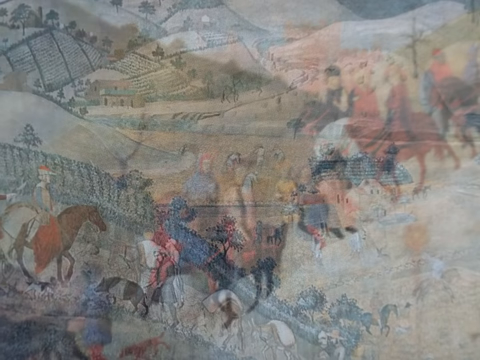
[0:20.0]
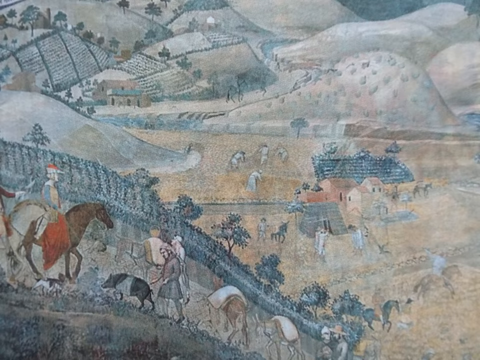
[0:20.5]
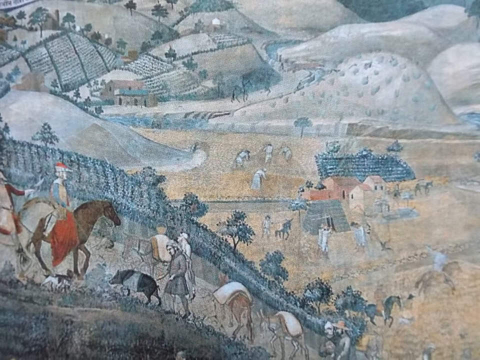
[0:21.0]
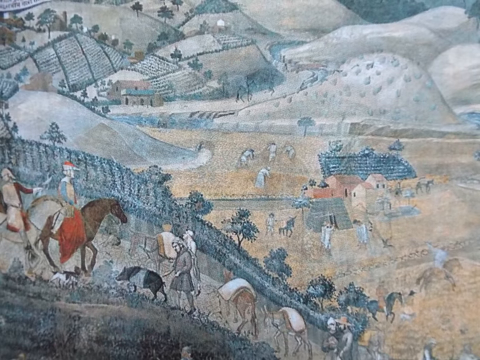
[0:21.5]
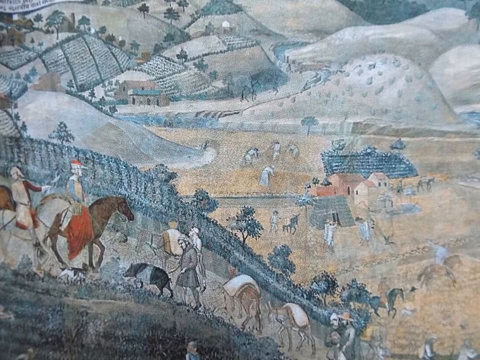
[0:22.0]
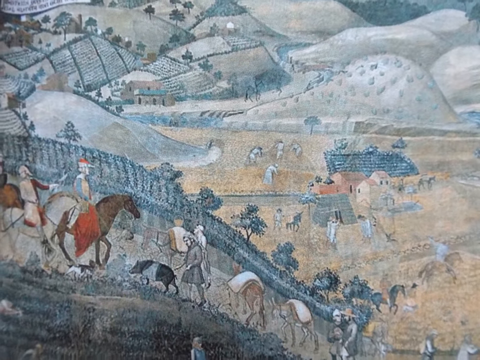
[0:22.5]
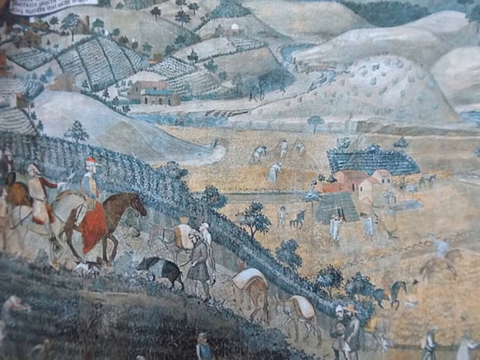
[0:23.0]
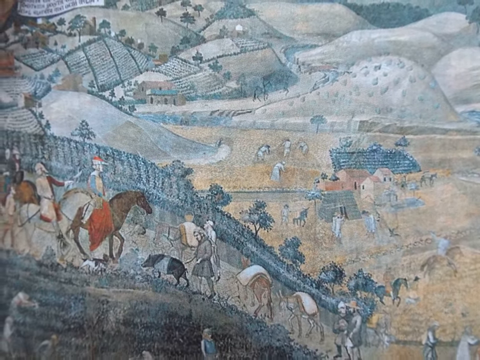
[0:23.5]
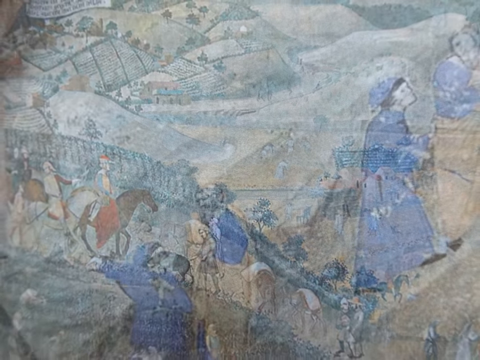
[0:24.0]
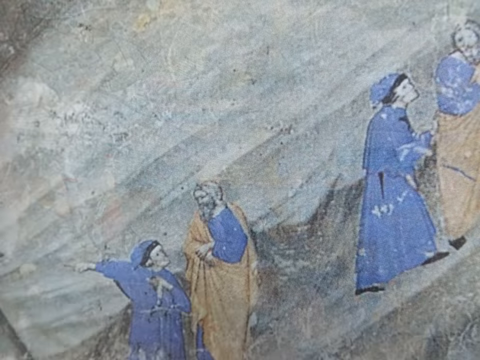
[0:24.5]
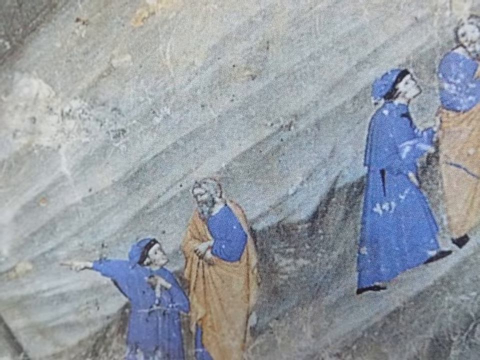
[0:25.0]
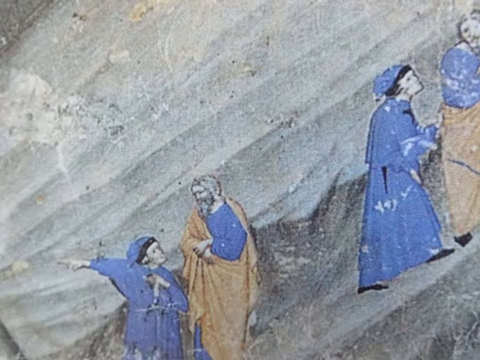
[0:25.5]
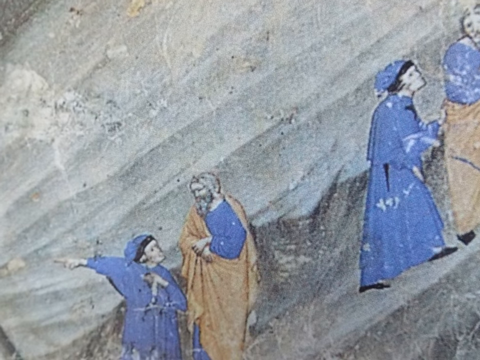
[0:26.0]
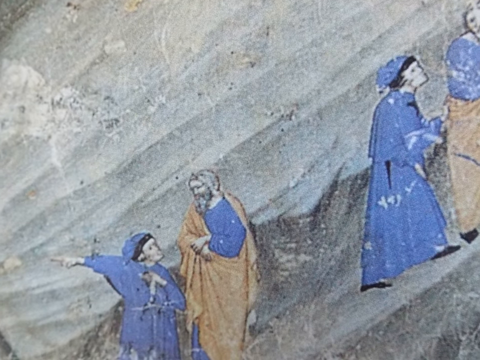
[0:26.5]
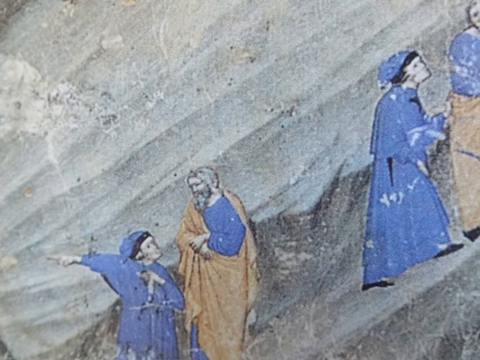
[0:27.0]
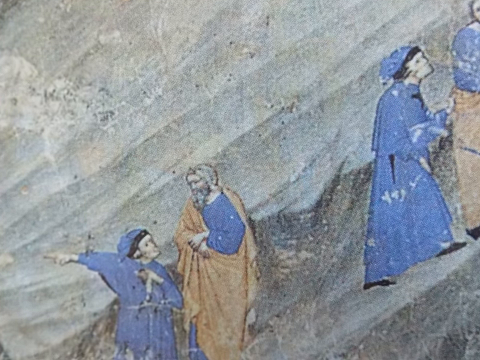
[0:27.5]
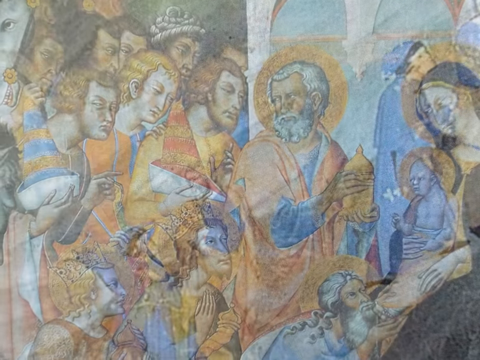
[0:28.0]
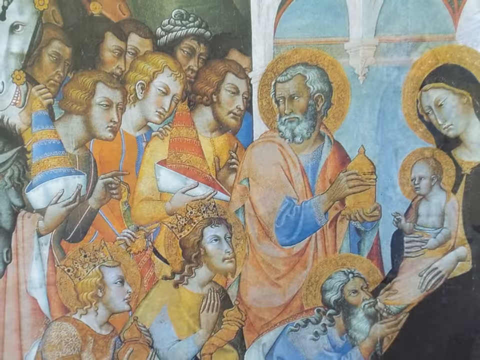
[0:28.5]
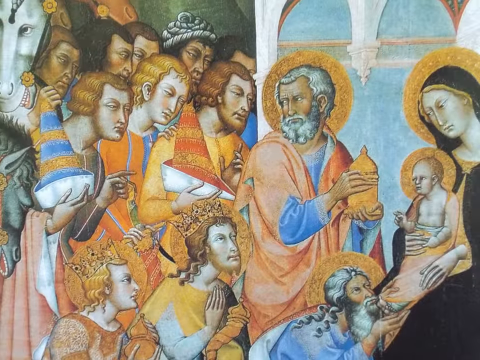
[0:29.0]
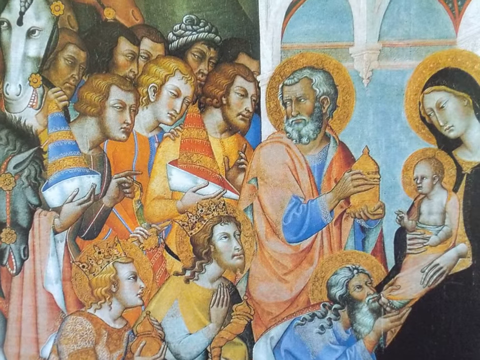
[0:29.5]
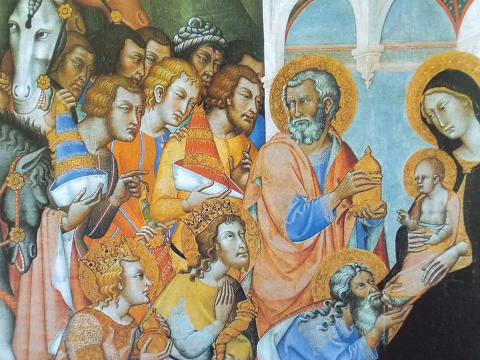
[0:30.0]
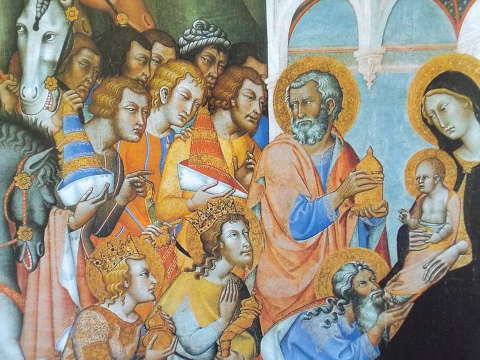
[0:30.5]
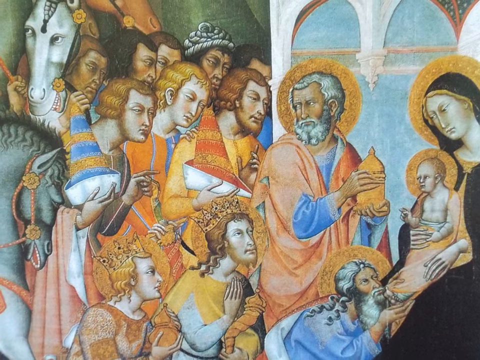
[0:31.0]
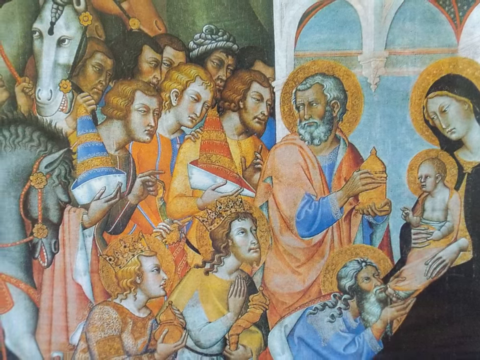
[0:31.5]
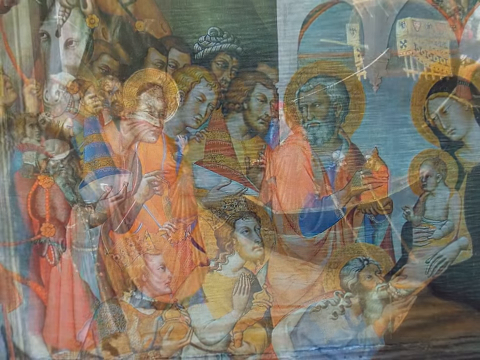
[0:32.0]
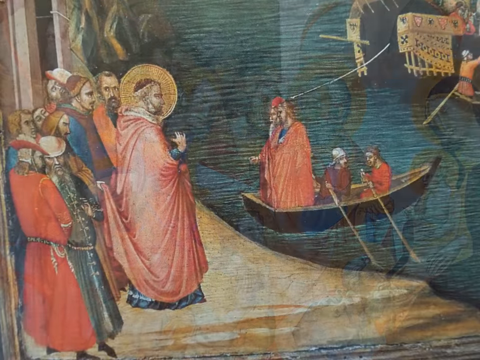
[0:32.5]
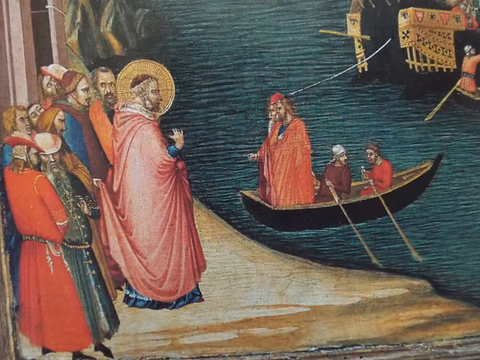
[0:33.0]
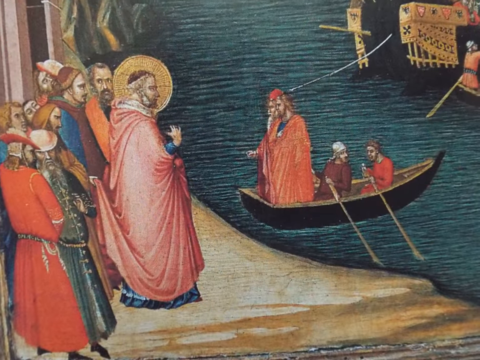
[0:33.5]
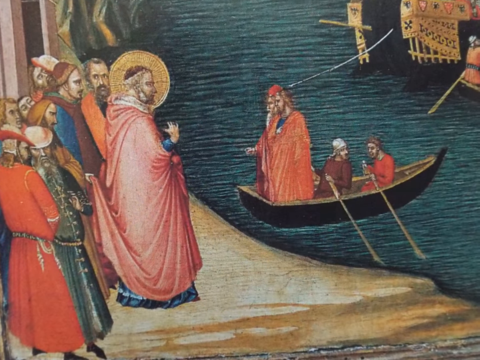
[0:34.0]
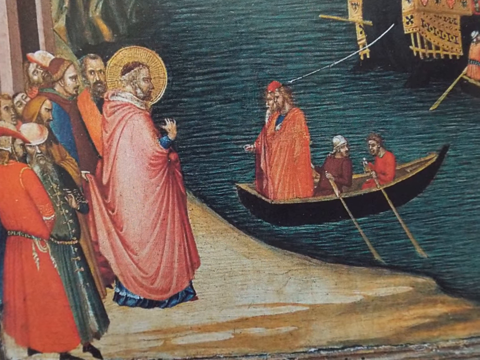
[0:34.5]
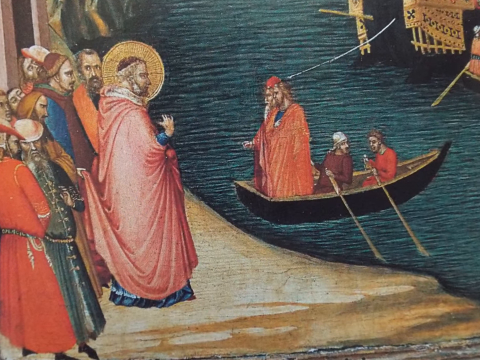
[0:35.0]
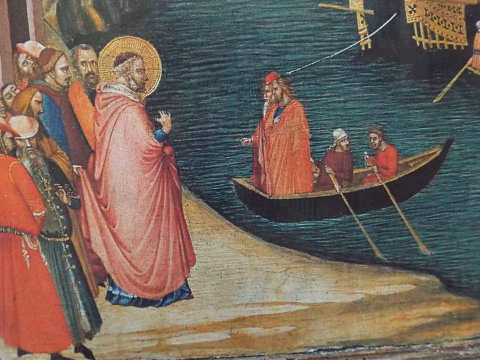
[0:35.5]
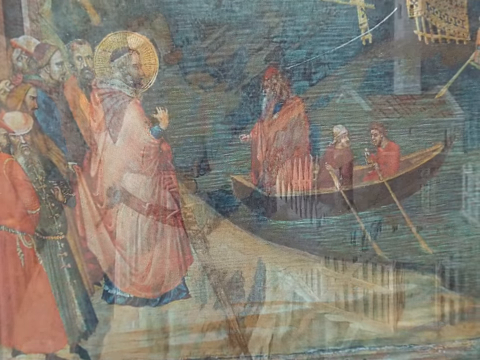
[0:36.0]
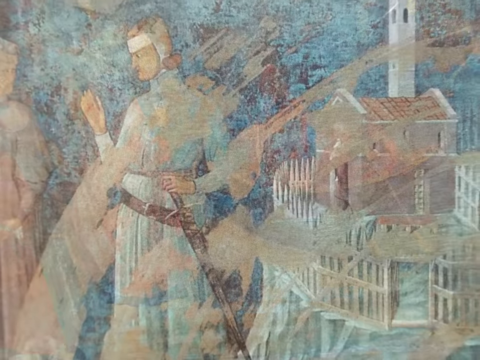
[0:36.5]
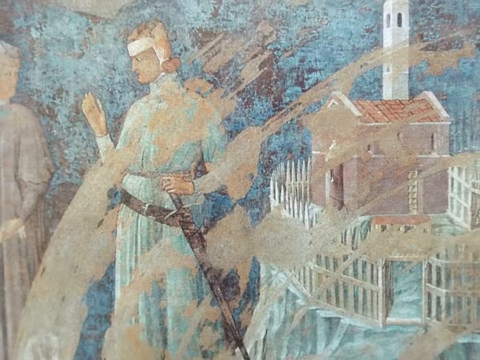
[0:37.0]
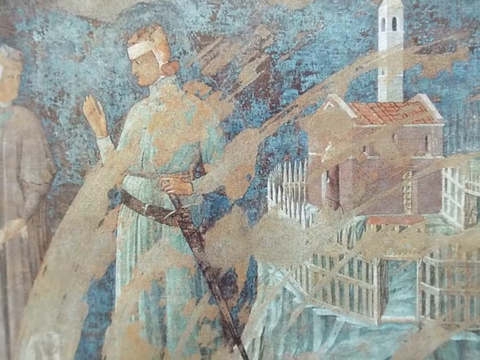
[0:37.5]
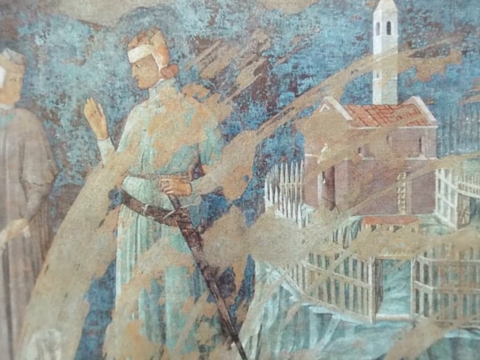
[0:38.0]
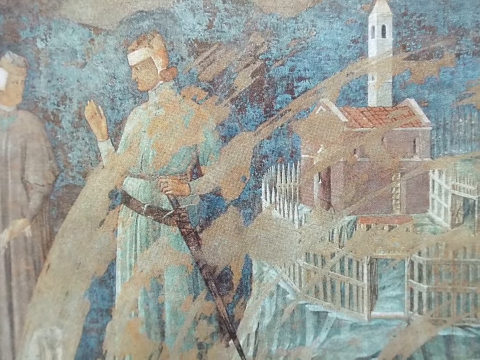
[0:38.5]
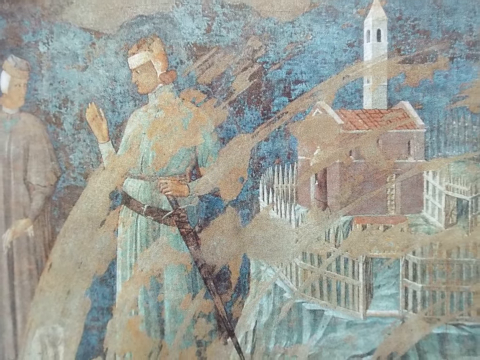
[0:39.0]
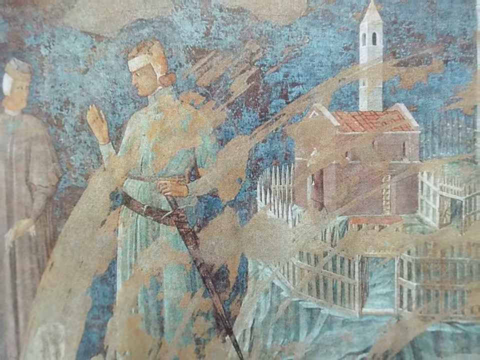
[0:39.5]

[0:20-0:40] An image that may be a painting or a drawing shows various hills, lots of gardens, and rows of trees throughout. People are with horses, and there are possibly donkeys and a pig; the donkeys have something laying over them. Below the hill are a few structures, and people are working in the field. The colors are sort of muted. The hills show rows of green dots, but the fields are mostly a beige cream color, more arid. The ground is yellow, maybe dry like hay or dead grass. The trees are fairly small, sparse and spread out, with no dense forest or bushes. Only a couple of little housing structures are visible down below. The horses are different colors: dark brown, light brown, and one black one at the bottom of the hill.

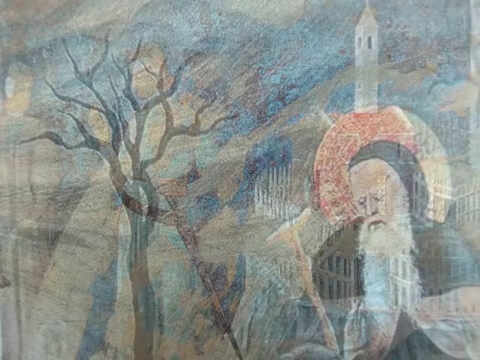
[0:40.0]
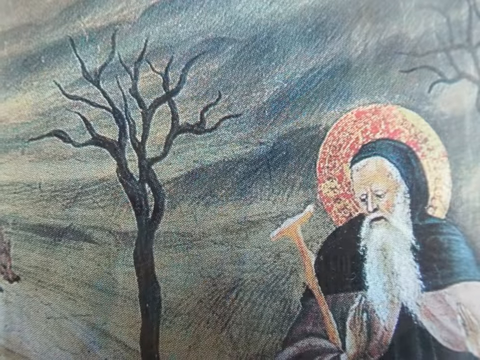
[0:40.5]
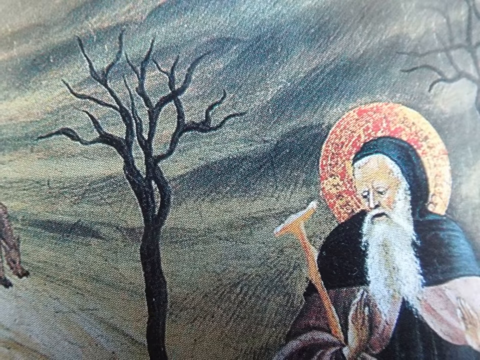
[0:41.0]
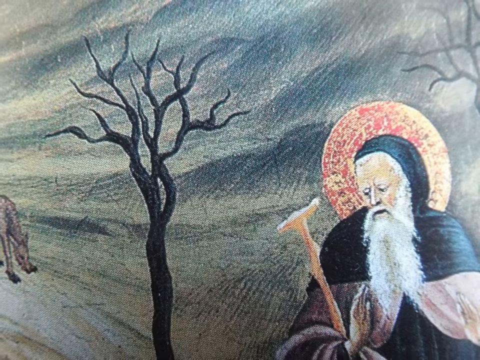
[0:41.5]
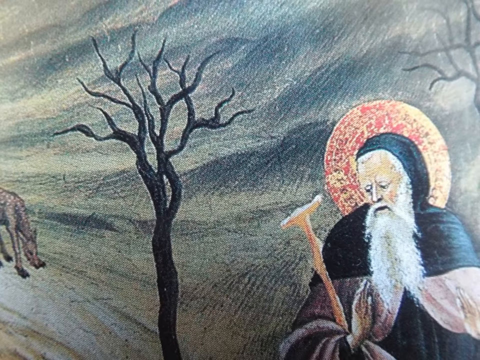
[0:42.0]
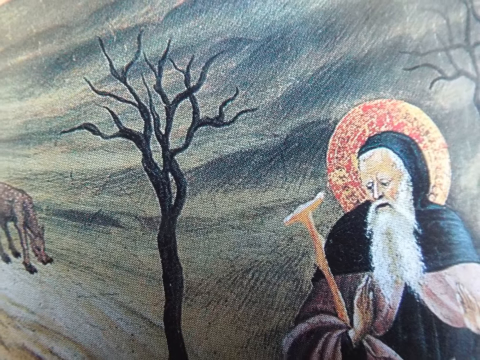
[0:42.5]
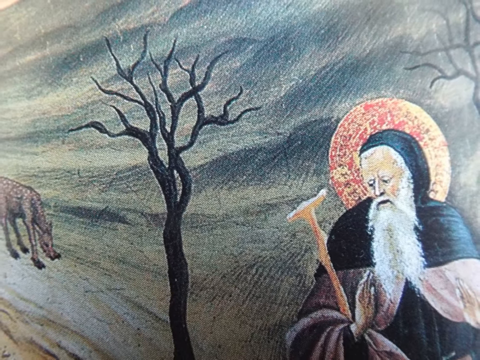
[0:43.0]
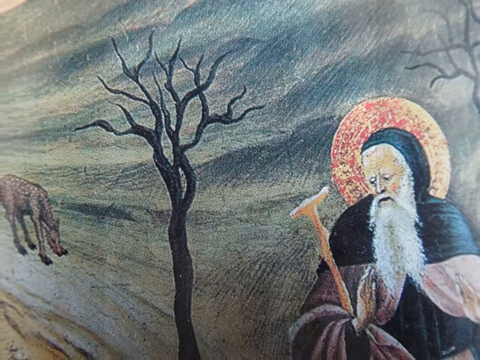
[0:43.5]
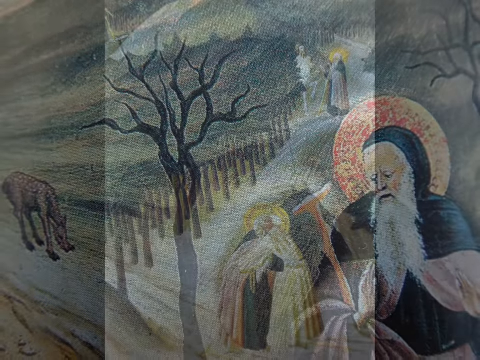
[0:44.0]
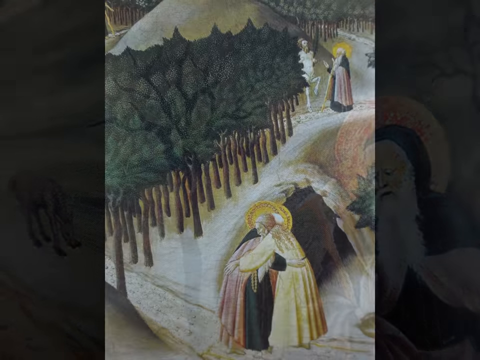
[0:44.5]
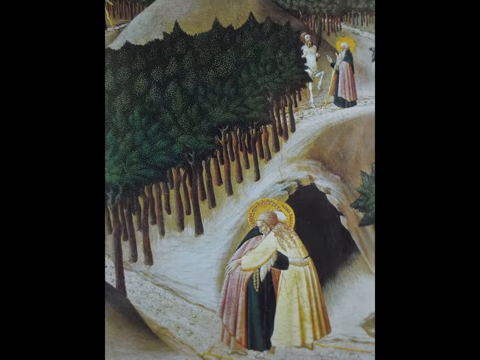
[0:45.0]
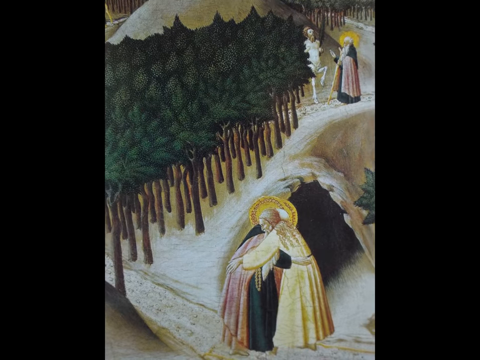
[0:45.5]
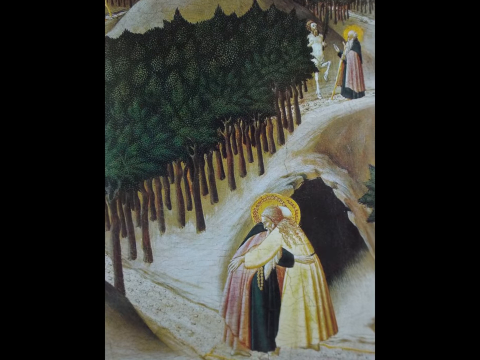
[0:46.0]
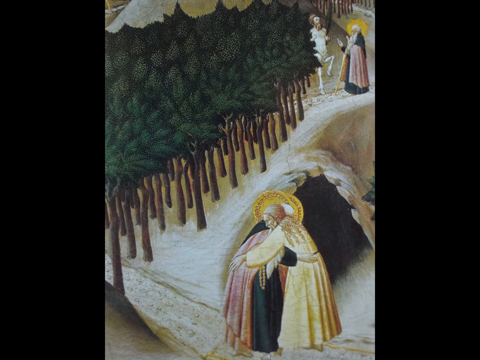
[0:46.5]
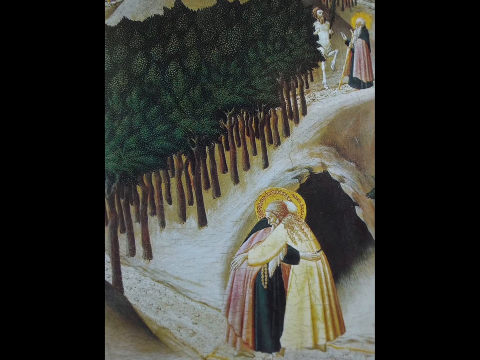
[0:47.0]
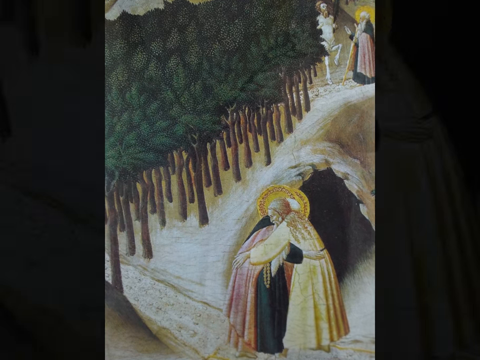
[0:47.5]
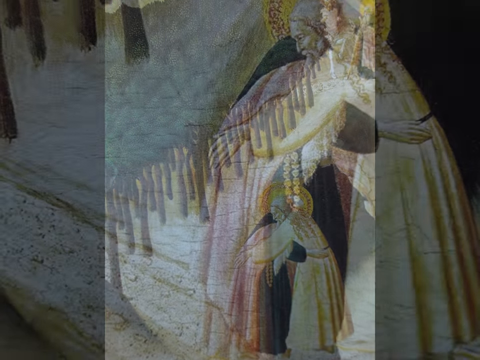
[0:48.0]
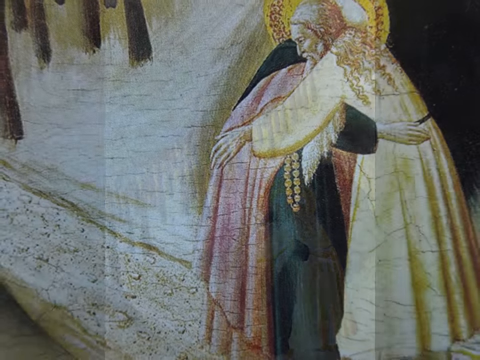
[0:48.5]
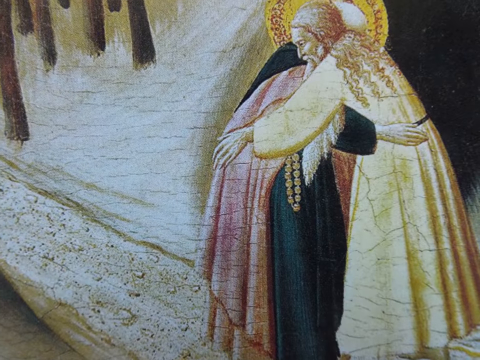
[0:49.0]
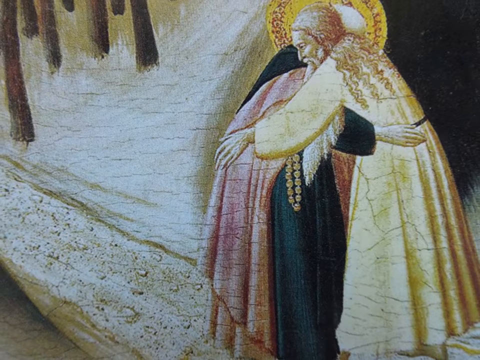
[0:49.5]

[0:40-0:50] A drawing shows the actual lines of the sketches and darker pencil shading. A barren tree has a nighttime appearance and shows movement. On the right is a man in a cloak with old, long white hair coming out the sides and a long, kind of wiry beard. He holds a cane, and behind his head is a halo in shades of red and orange. On the left is what looks like a deer grazing on the ground. Next is a flat painting of two people hugging, wearing draped clothing, with golden halos behind them. They are next to a hill that looks like it has an opening, and on the hill are rows of clusters of trees. A naked man with a beard has his left leg up and is talking to a man in a robe with a golden halo behind him. A closer view shows the two men hugging: they are older, with long, curly hair. One wears a yellow robe dress, and the other wears black with a pink scarf and some type of beaded necklace hanging on the side.